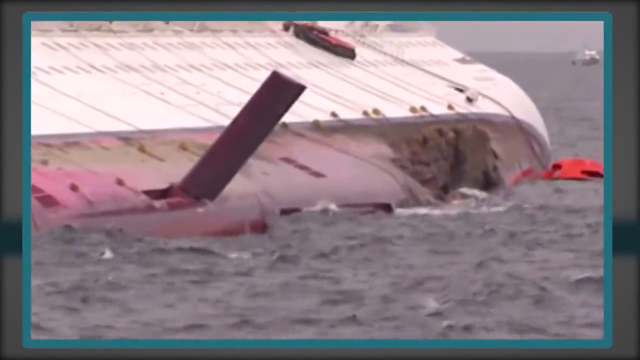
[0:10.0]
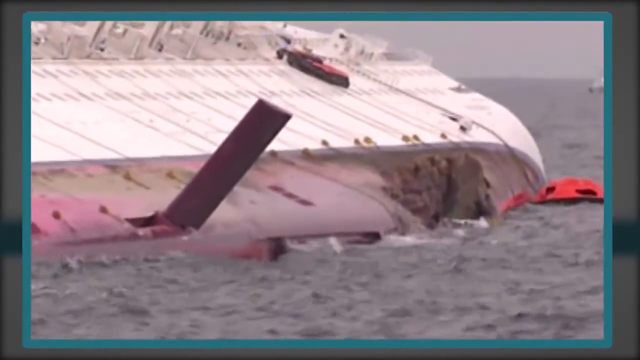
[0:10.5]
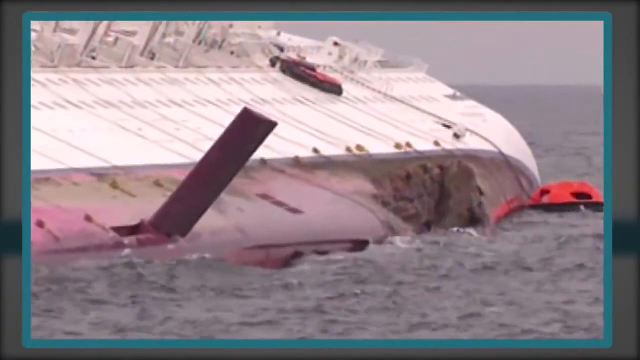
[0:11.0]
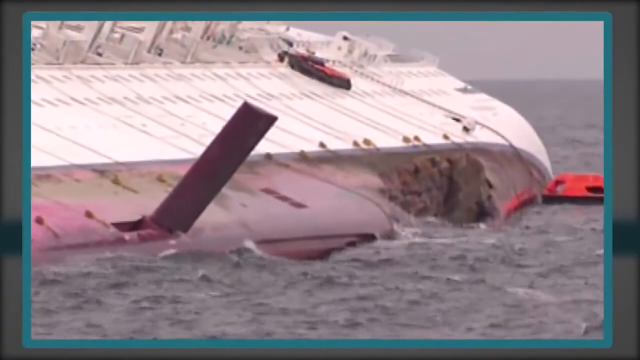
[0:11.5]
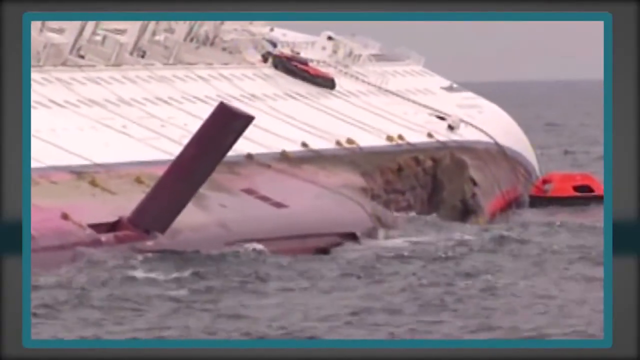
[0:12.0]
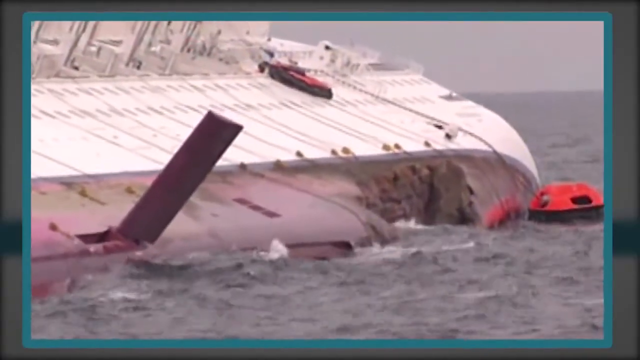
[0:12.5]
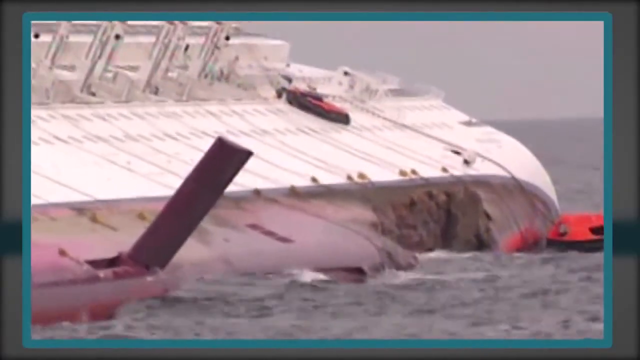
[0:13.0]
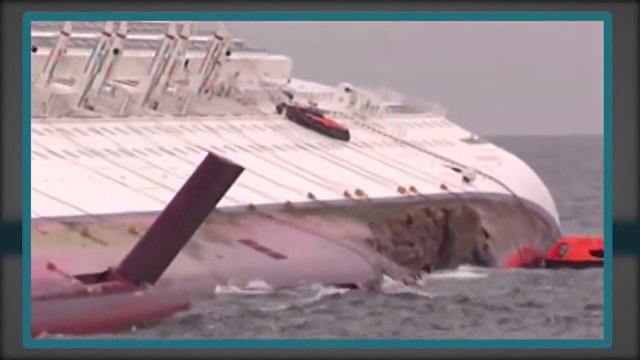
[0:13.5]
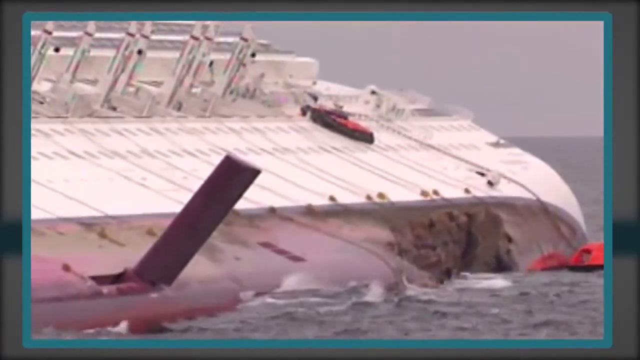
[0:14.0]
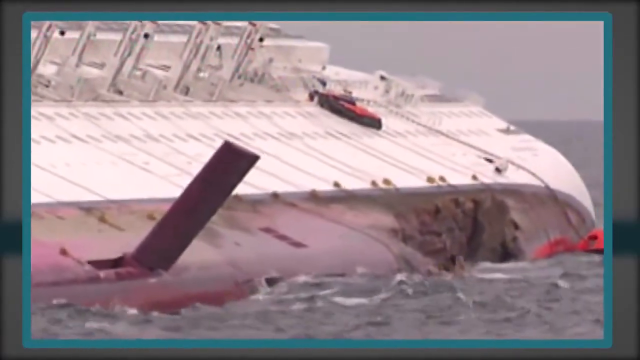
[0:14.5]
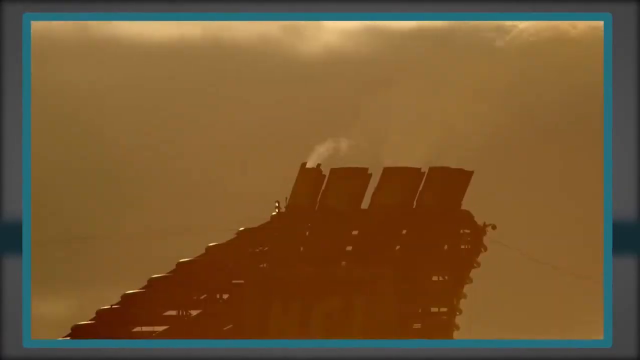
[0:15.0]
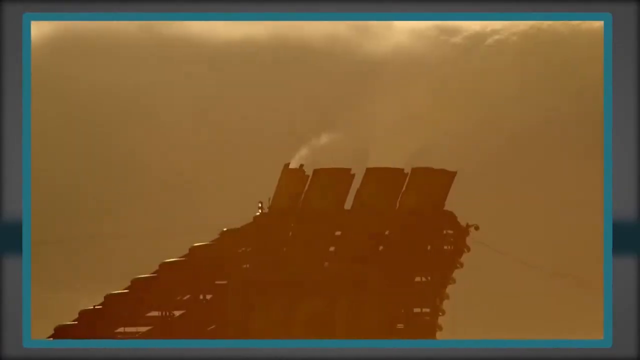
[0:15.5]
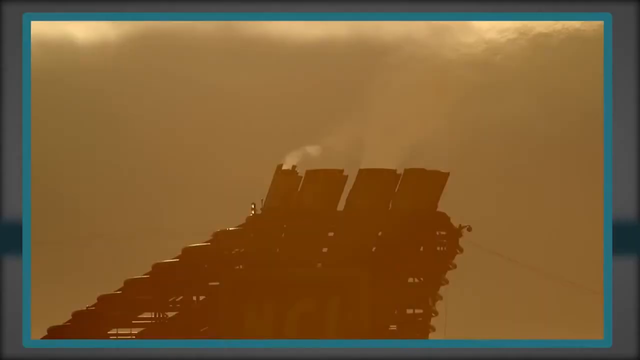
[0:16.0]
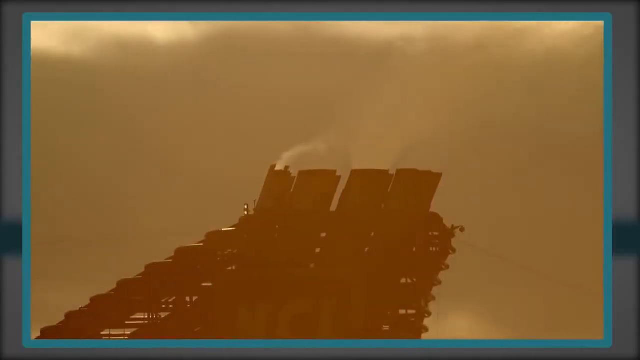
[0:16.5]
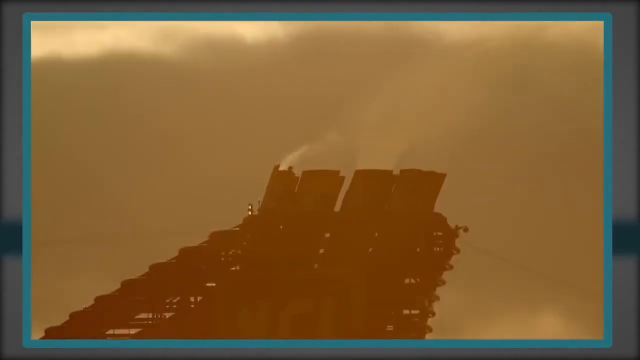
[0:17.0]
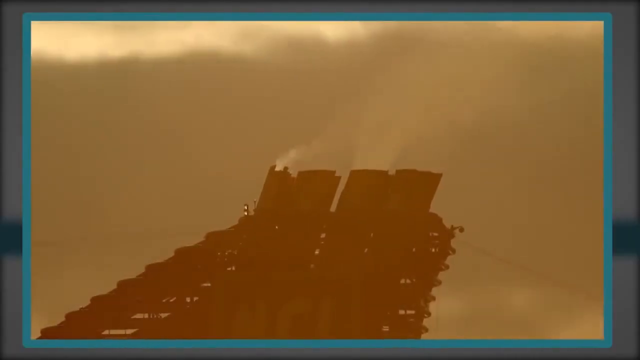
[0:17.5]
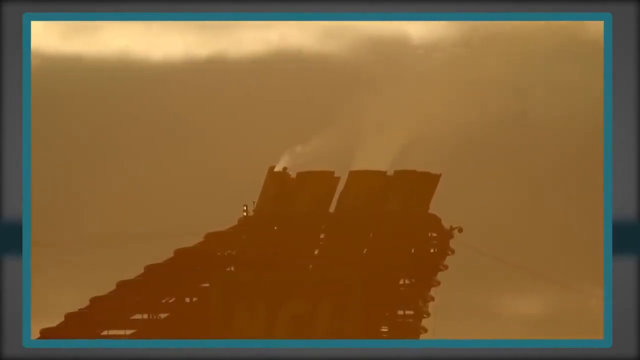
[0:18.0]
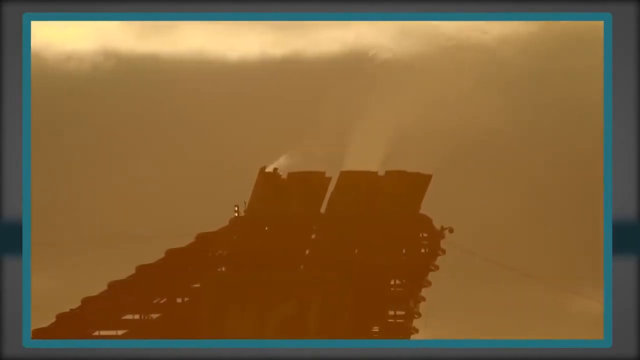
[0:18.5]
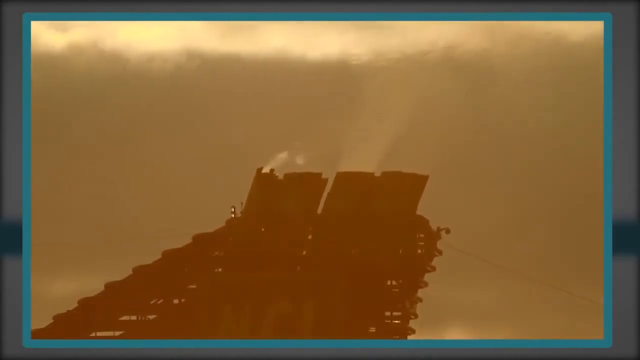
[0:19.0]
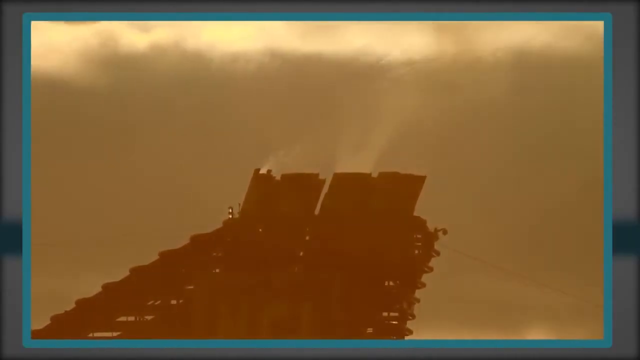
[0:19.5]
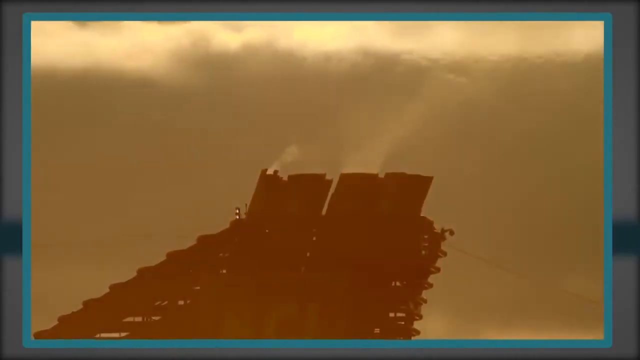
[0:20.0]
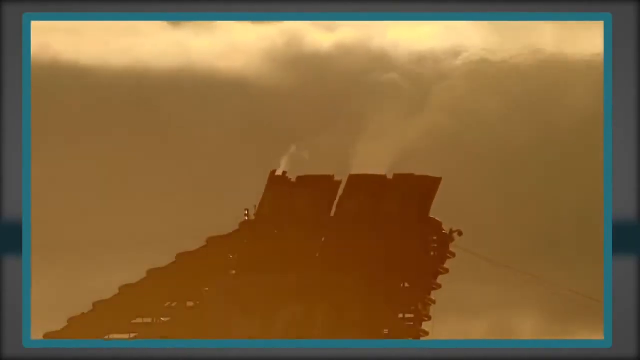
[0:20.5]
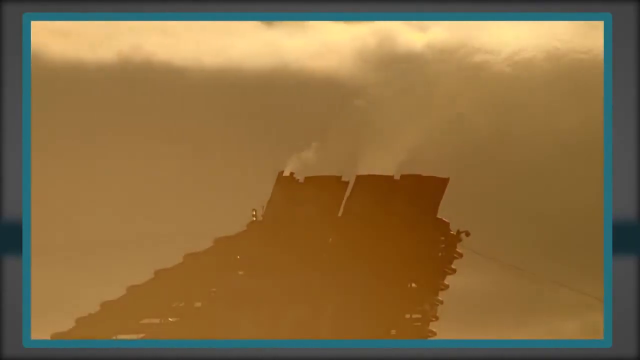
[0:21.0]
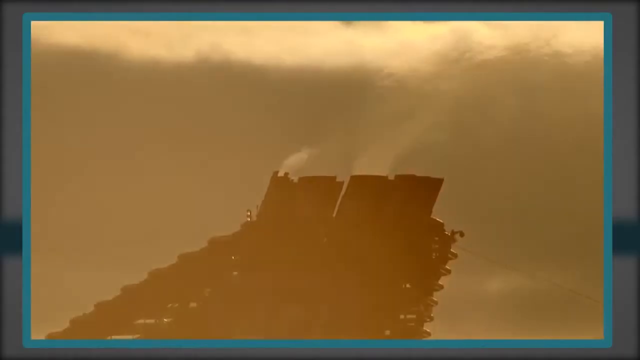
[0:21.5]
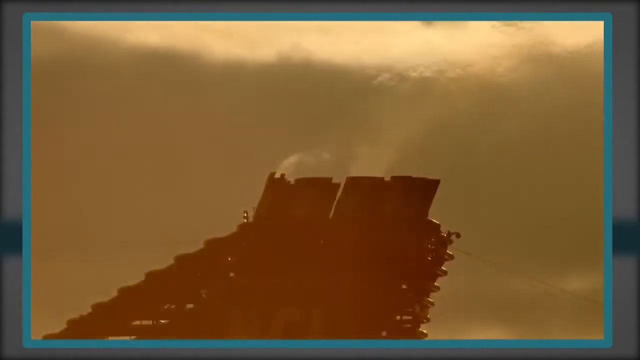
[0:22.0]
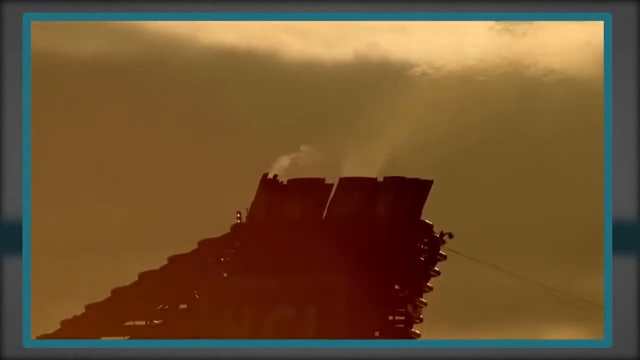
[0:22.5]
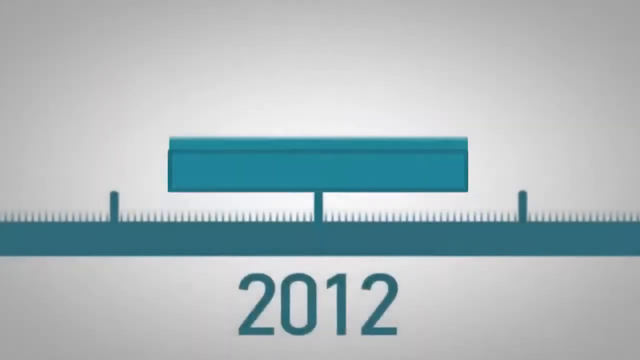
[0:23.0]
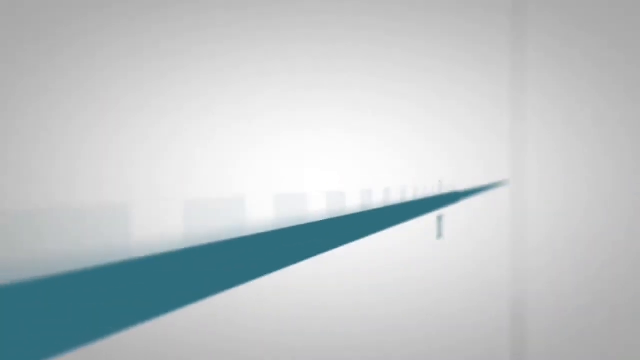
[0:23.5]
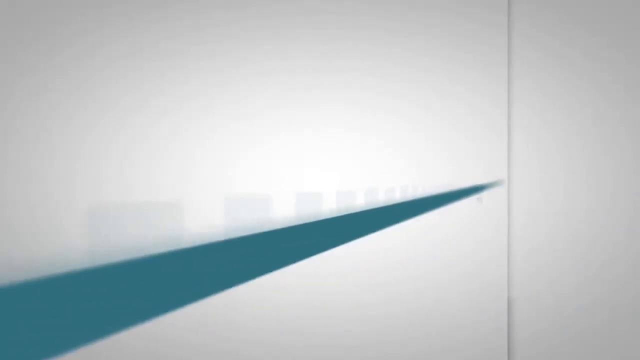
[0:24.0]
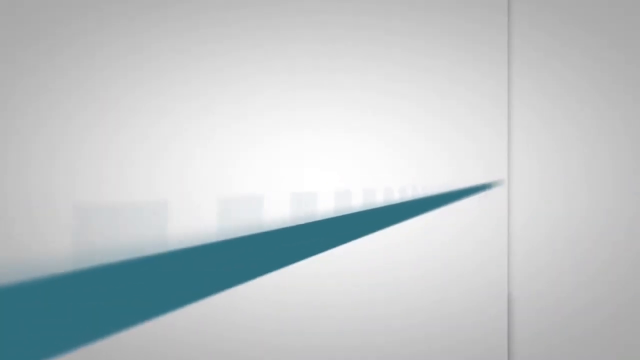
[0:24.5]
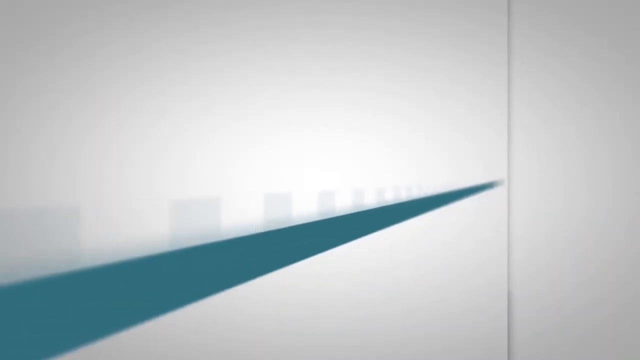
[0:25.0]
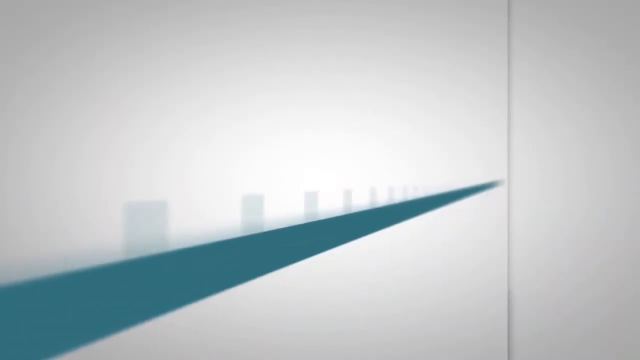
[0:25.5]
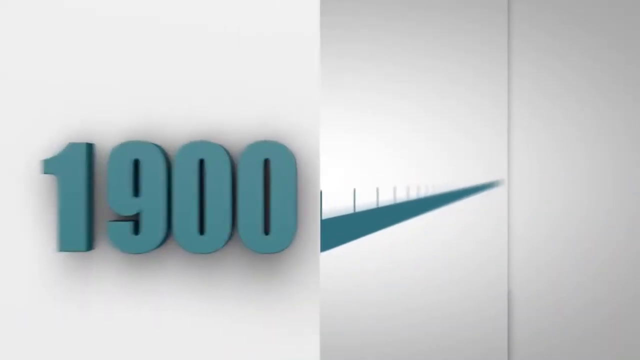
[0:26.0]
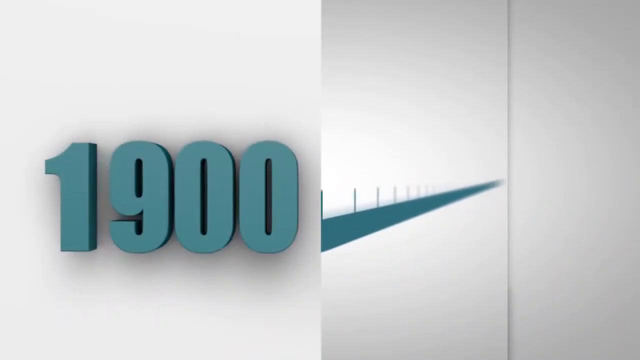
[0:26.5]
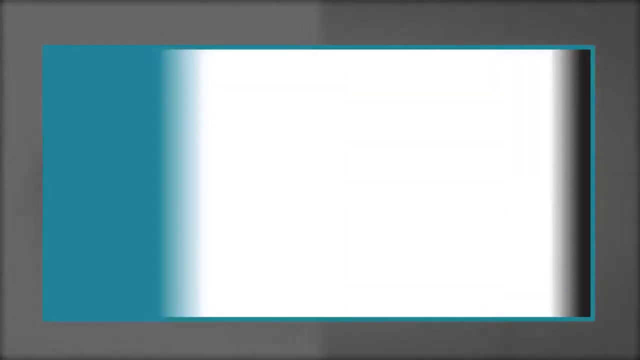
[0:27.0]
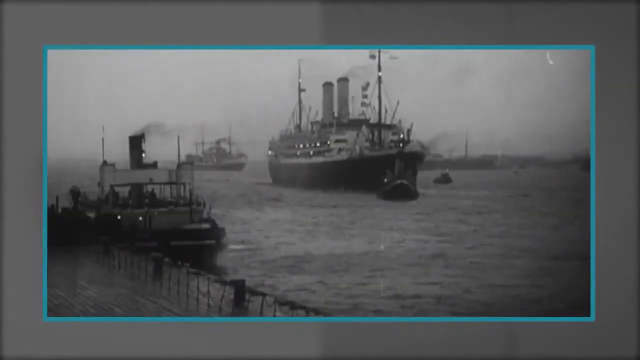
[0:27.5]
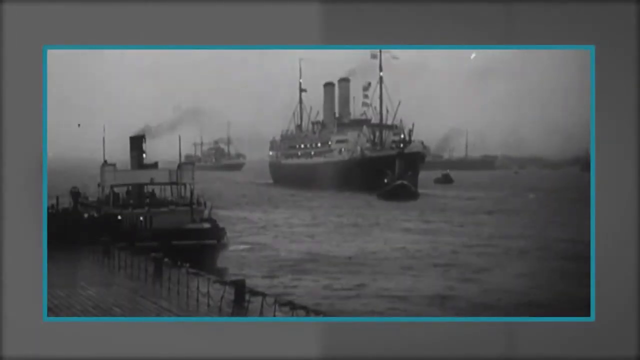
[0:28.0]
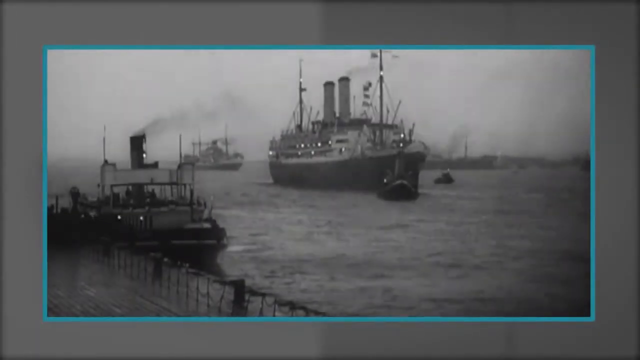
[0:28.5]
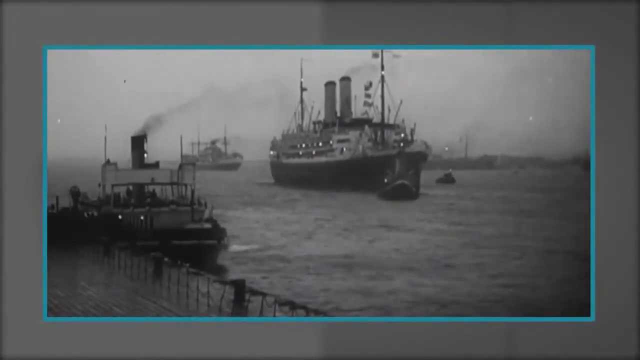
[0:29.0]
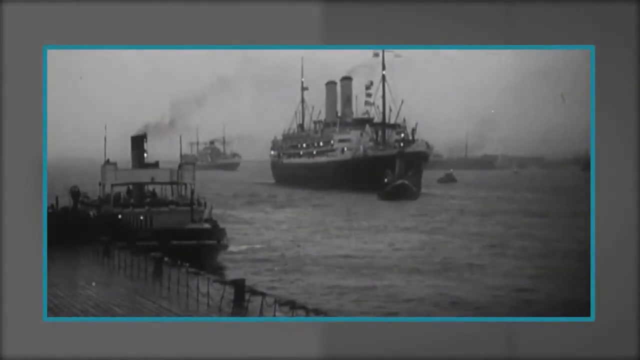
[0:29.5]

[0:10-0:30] A close-up shows the side of the ship. Next comes a darker view, possibly later at night or in the day, of some smokestacks billowing smoke into the sky; it is unclear whether this is the same ship, possibly a ship outline with some smokestacks. A teal timeline graphic then appears, focused on "2012", and moves down the timeline to "1900". A large ocean liner appears in black and white, looking like it is from 1900, with two smokestacks, and a smaller tugboat docked to the lower left of it. The liner is on the ocean, with a couple of other ships in the background. This footage is outlined in a teal rectangular box that takes up most of the screen, with gray in the background; the timeline graphics and the outlines are the same teal.